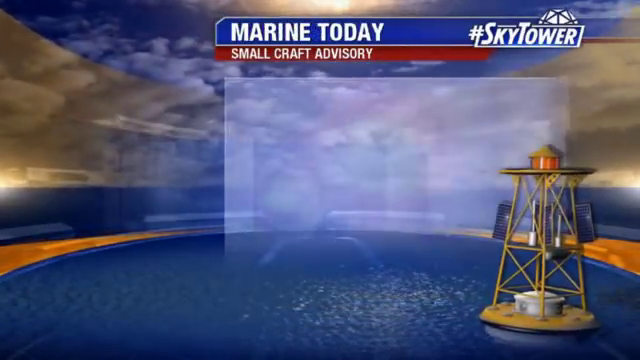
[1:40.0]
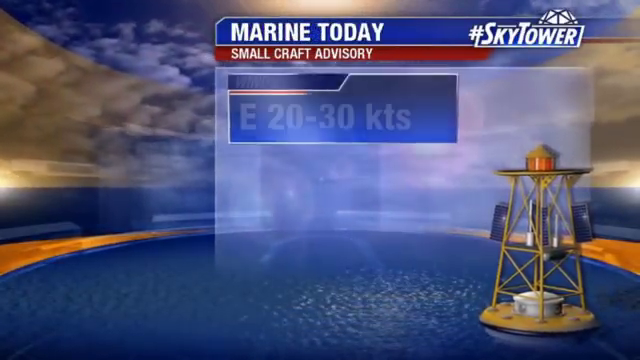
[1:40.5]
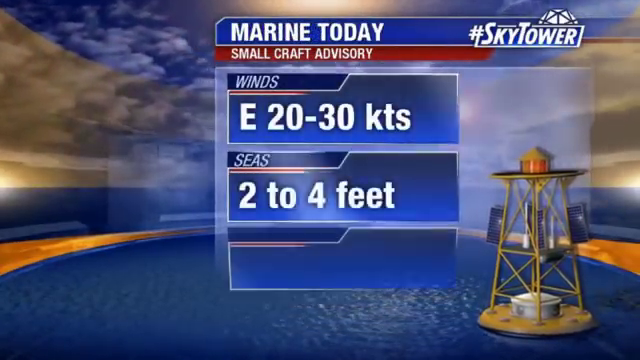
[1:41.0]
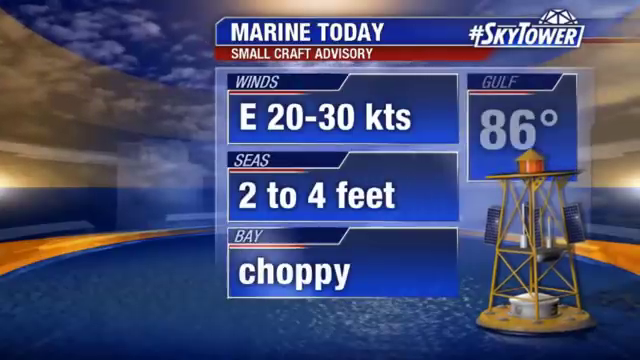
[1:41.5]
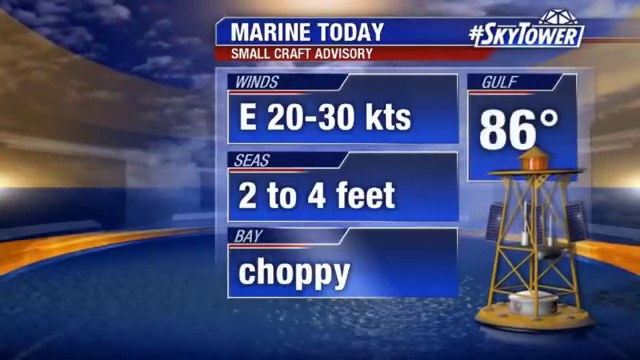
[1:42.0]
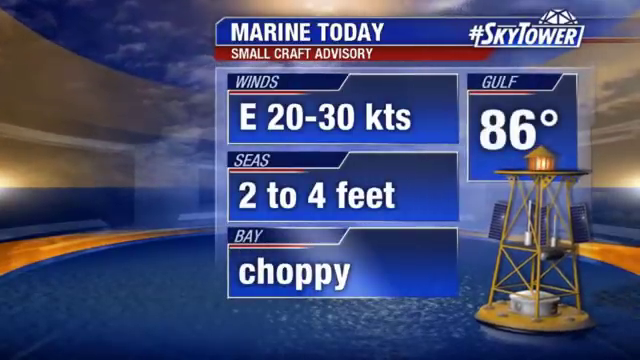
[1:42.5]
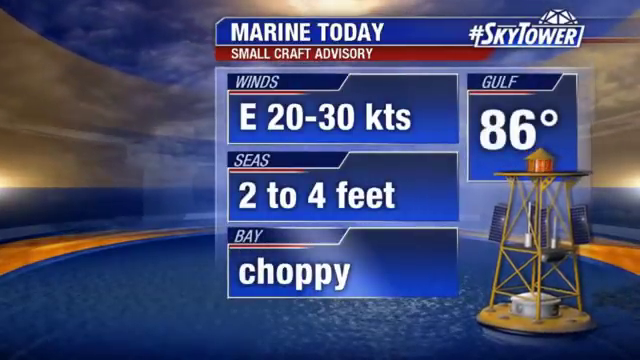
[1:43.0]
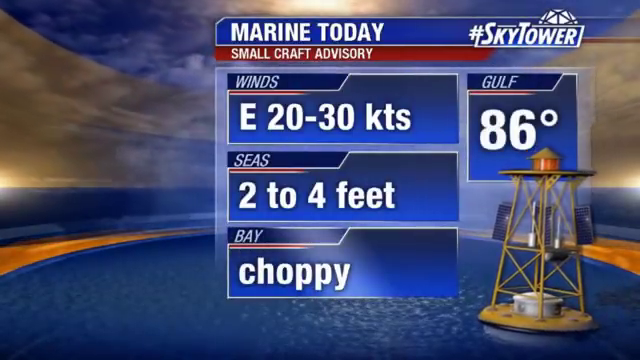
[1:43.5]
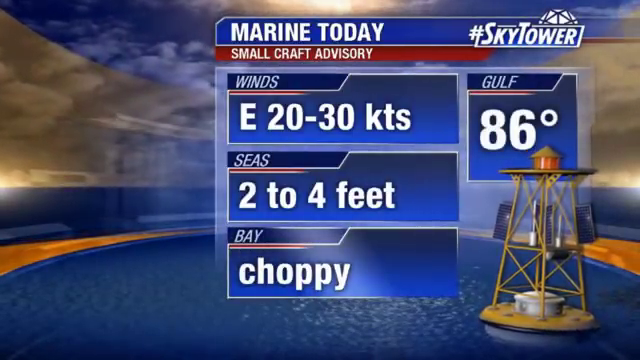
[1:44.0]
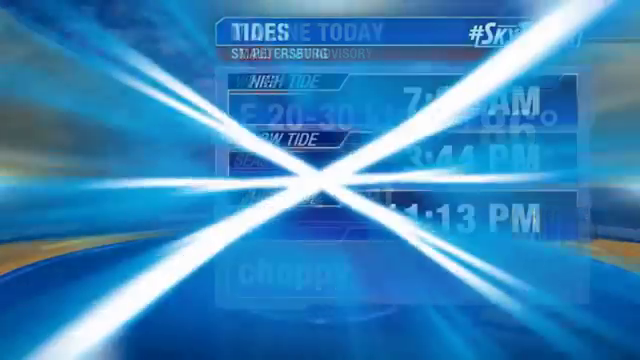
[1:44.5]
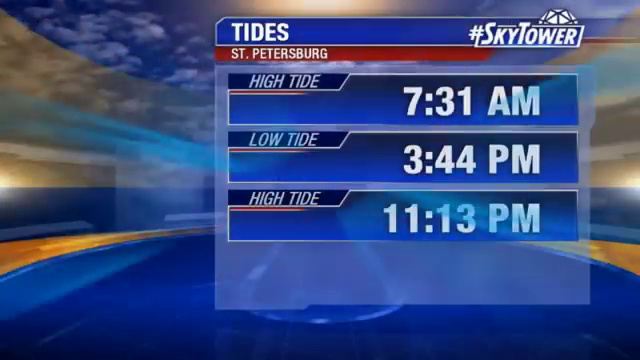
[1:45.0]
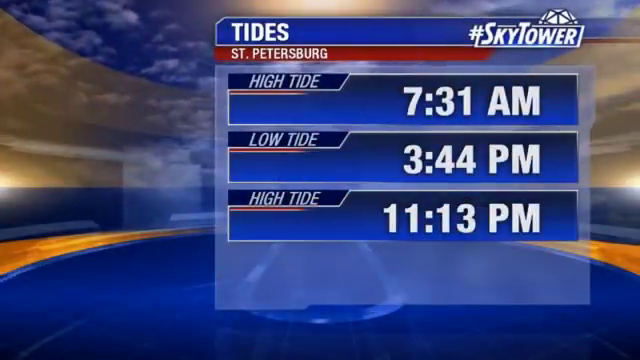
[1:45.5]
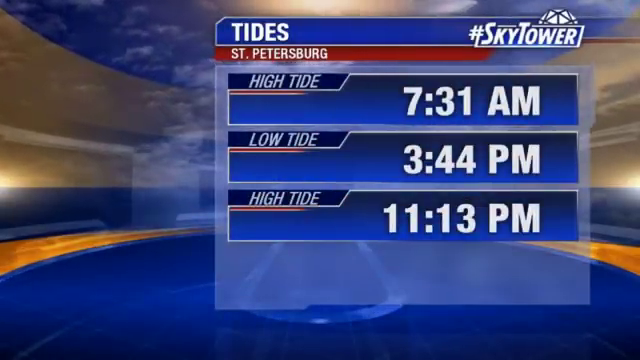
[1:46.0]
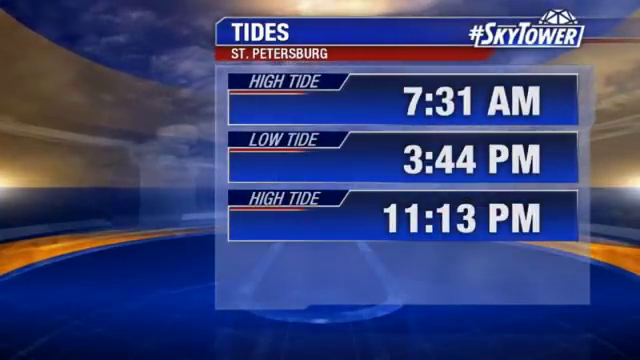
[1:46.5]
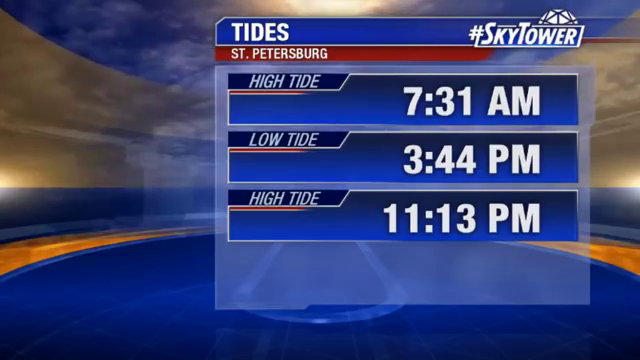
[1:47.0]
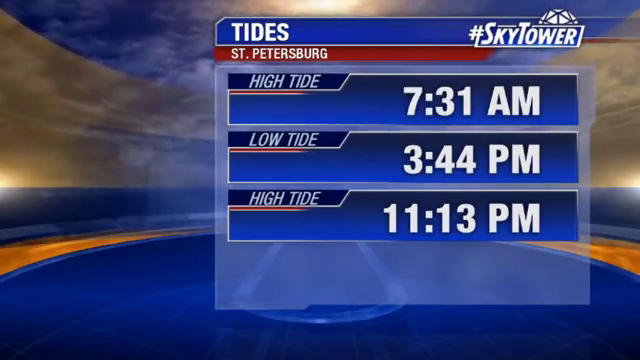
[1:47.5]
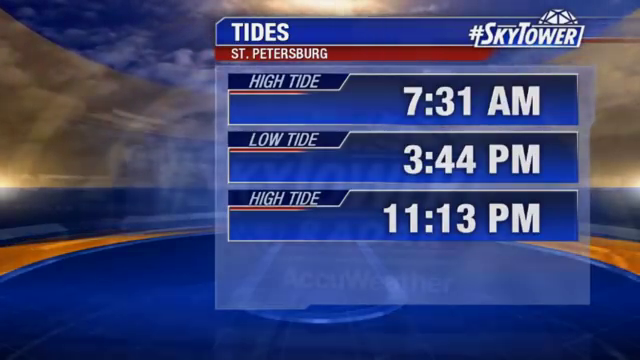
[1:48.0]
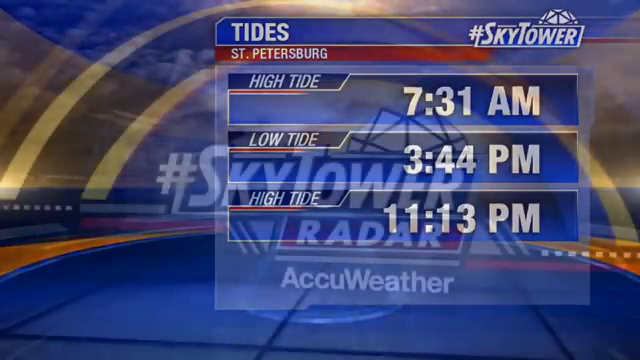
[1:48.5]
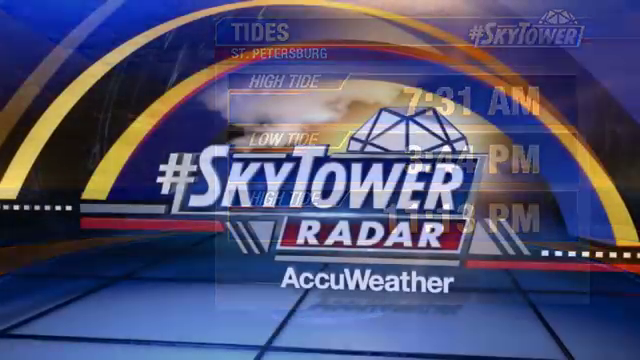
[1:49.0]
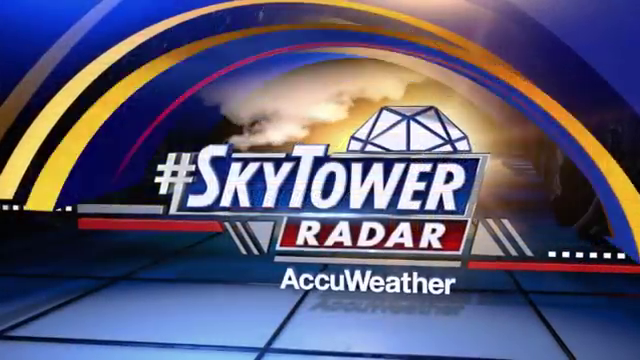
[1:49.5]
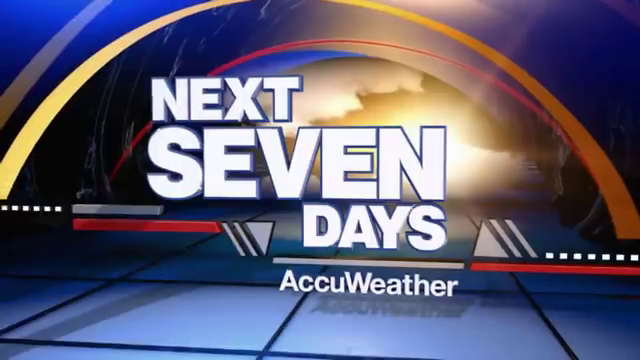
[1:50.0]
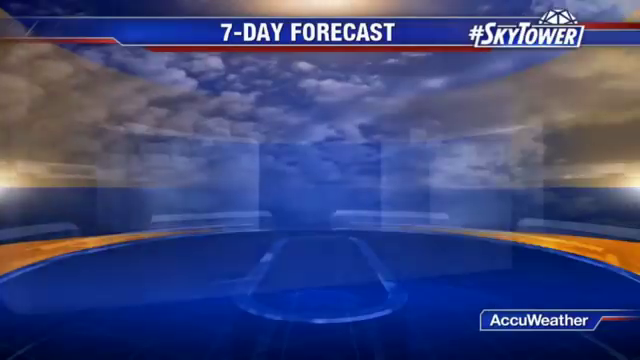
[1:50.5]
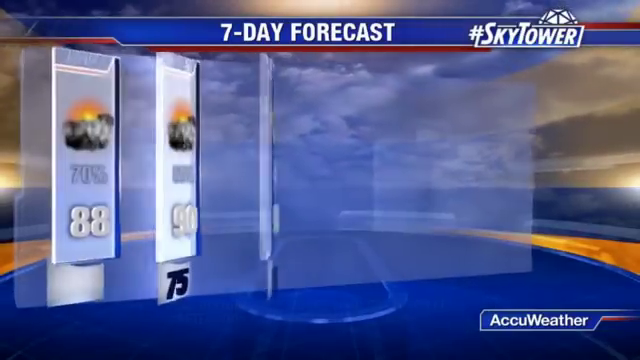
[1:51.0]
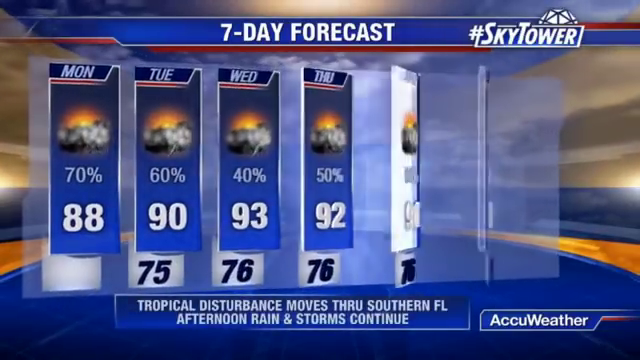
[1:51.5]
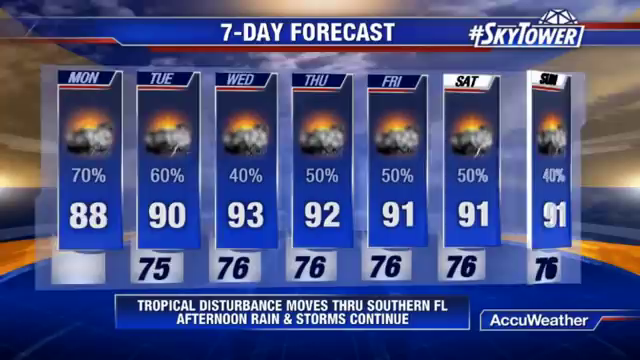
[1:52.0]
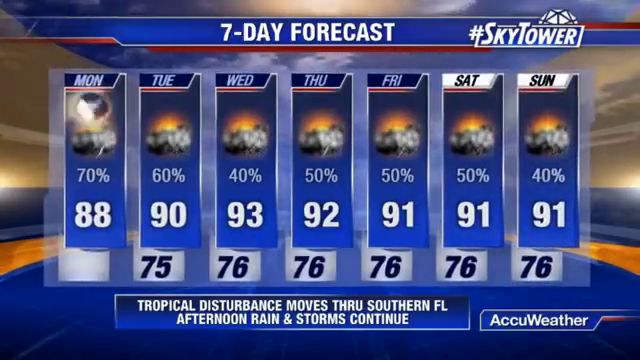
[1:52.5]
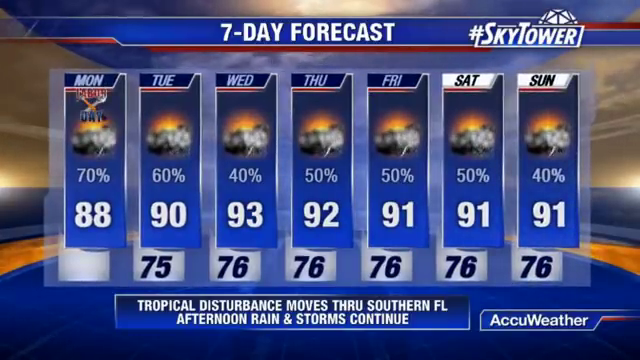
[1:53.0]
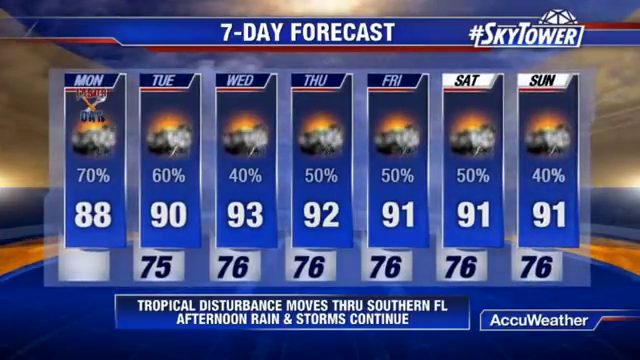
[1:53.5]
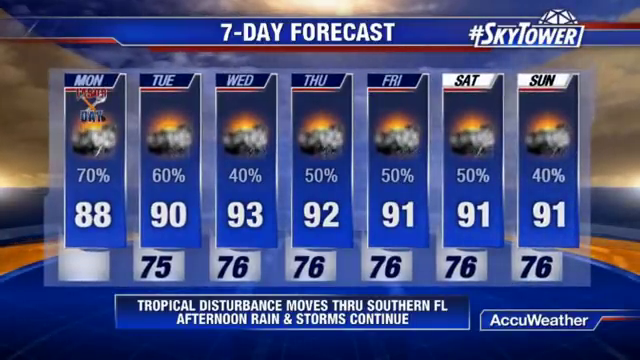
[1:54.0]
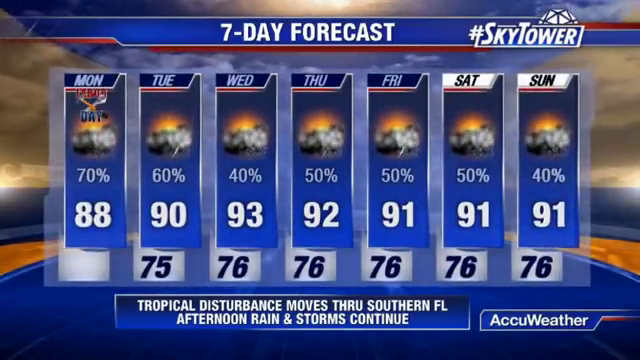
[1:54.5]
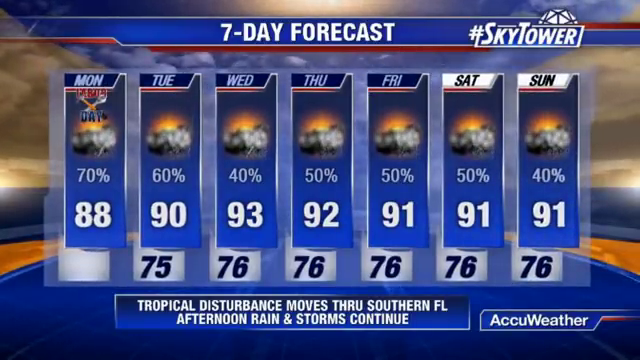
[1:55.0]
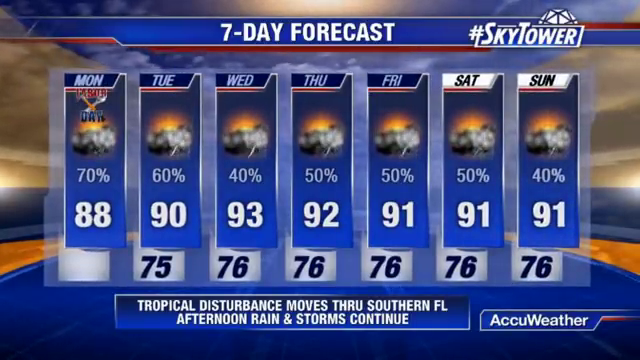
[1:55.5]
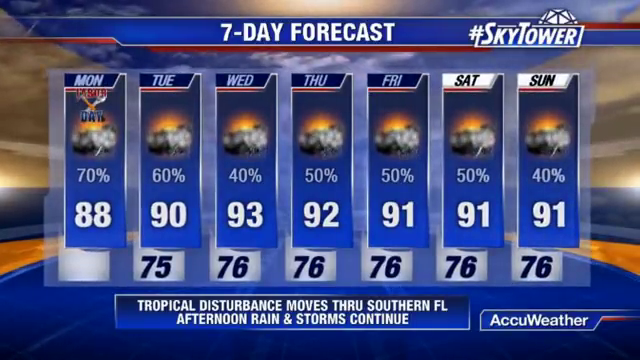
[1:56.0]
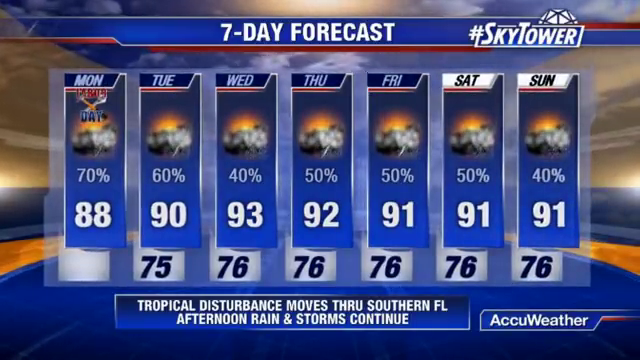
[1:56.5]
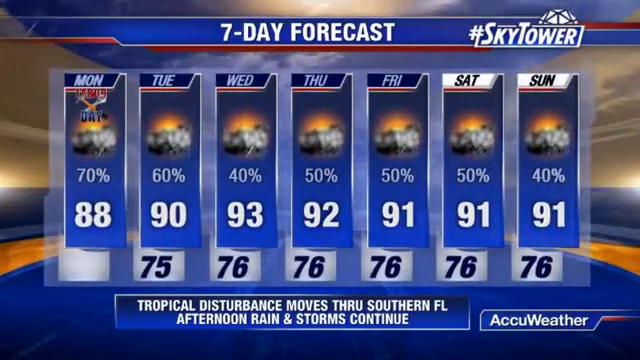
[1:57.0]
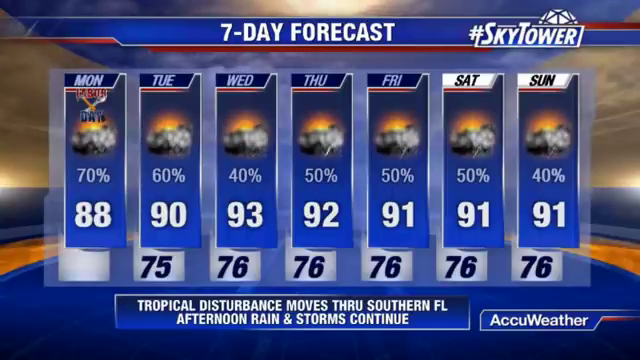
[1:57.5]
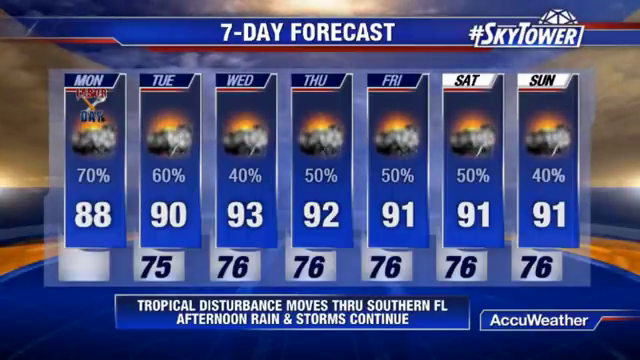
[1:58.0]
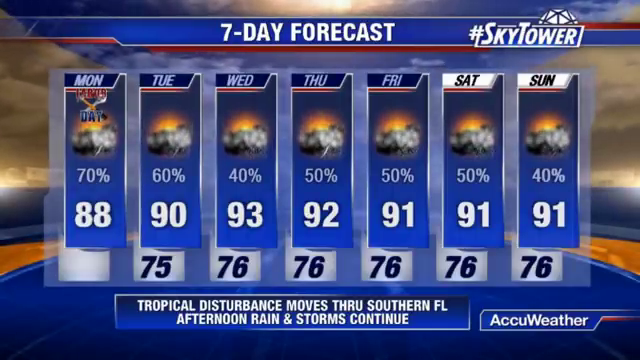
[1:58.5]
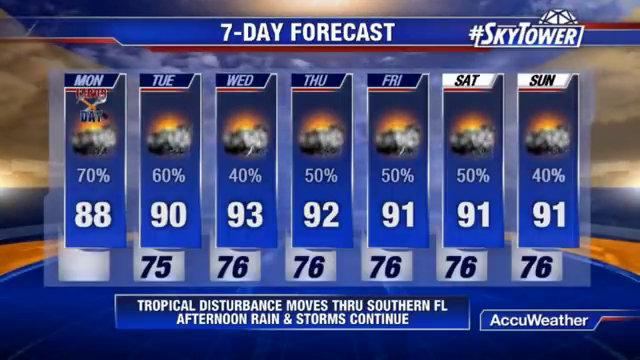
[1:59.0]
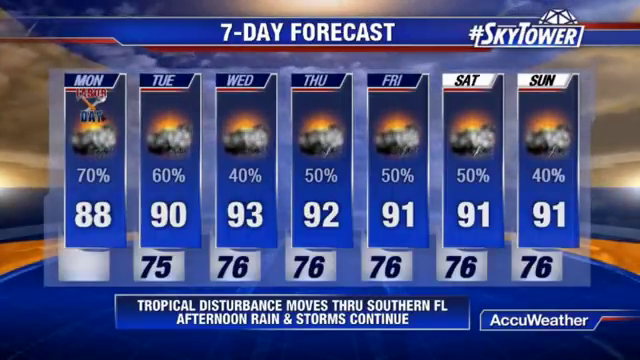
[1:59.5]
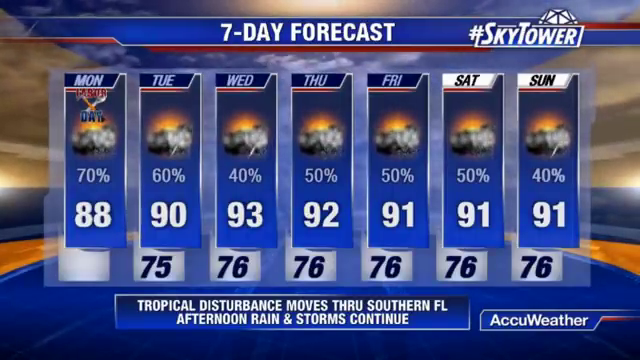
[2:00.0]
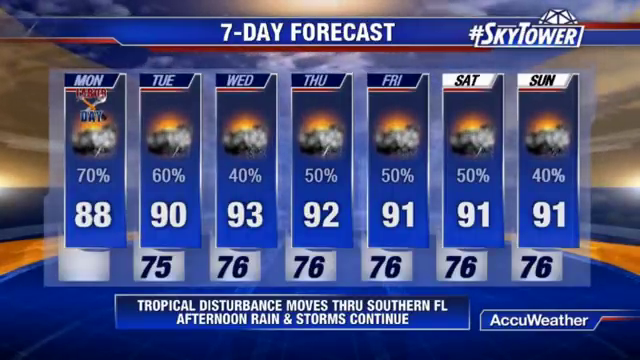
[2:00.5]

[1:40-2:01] A computer graphic shows a blue banner in white font at the top center reading "Marine Today", and below it a small red banner in white font reading "Small Craft Advisory". Rectangular boxes appear on the screen giving wind speeds in knots, how high the seas are, and the condition of the bay, such as "choppy". The Gulf temperature is given as 86 degrees. The forecasts pertain to boating, and there is a cartoon image of a buoy out on the ocean. The graphic then changes to tide data in a similar format of blue rectangular boxes, listing high tide and low tide with different times for each.